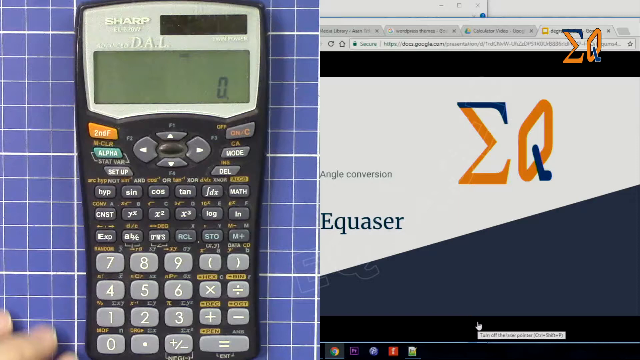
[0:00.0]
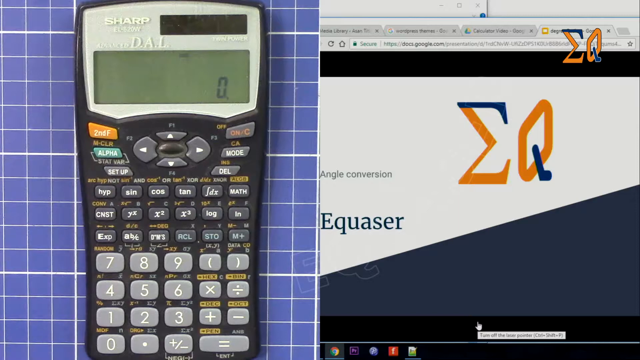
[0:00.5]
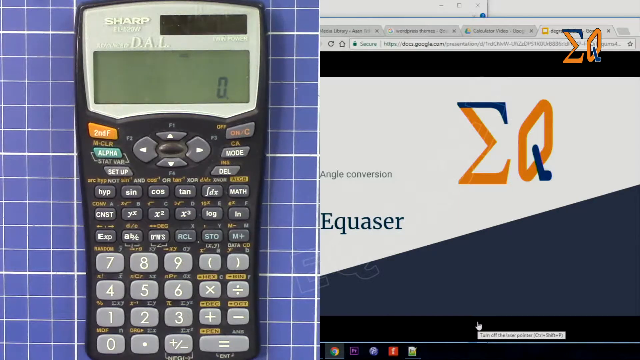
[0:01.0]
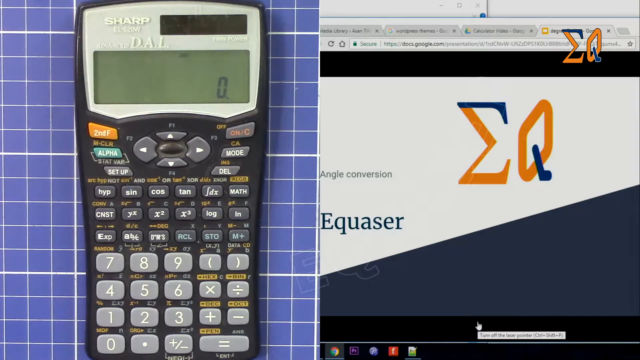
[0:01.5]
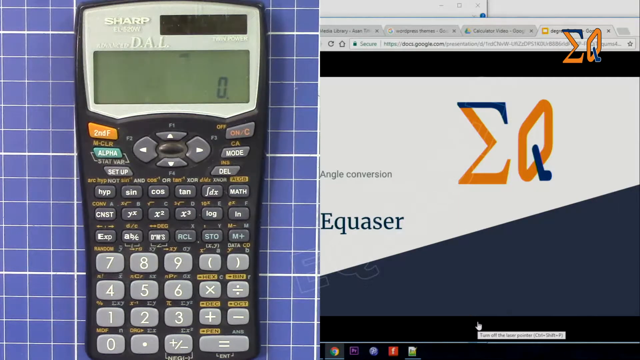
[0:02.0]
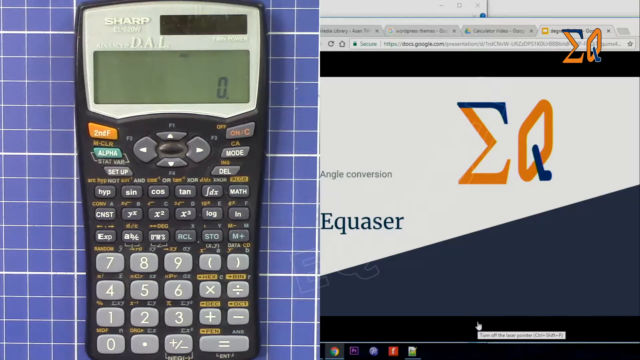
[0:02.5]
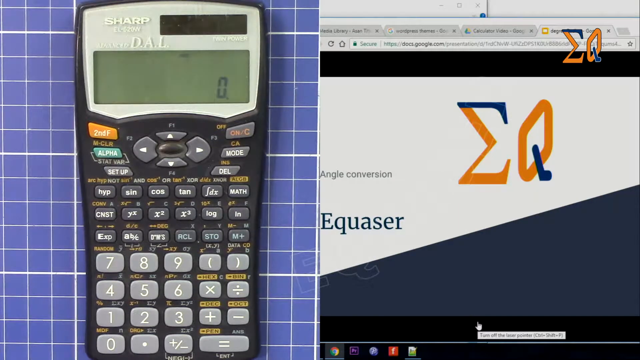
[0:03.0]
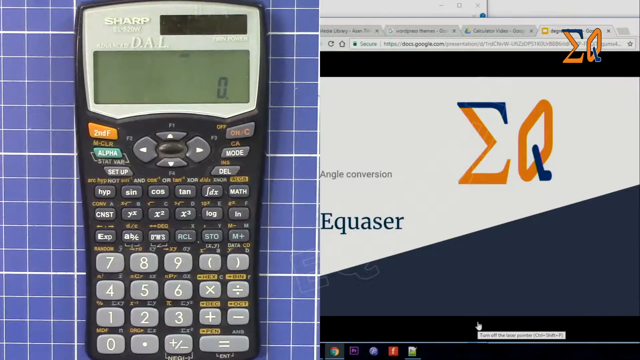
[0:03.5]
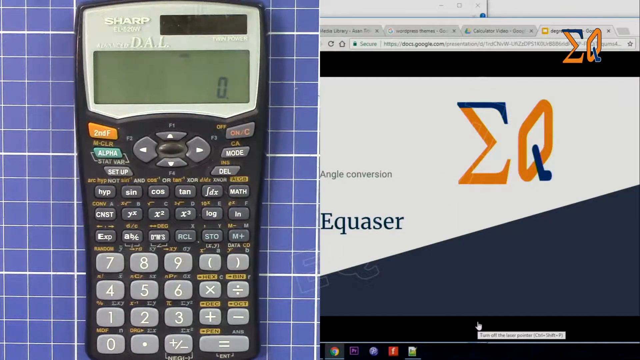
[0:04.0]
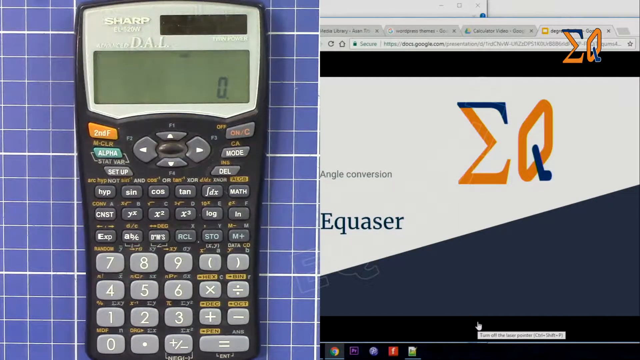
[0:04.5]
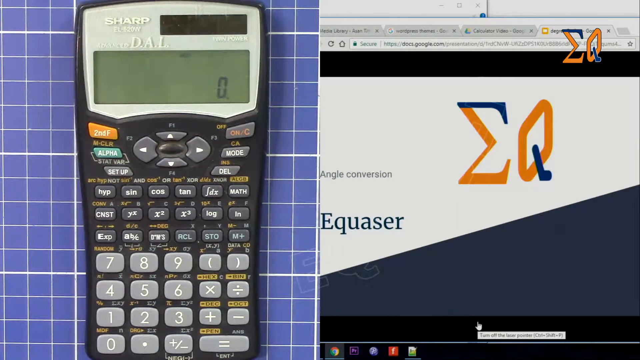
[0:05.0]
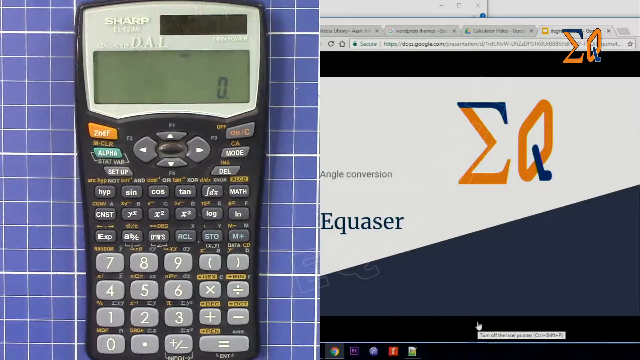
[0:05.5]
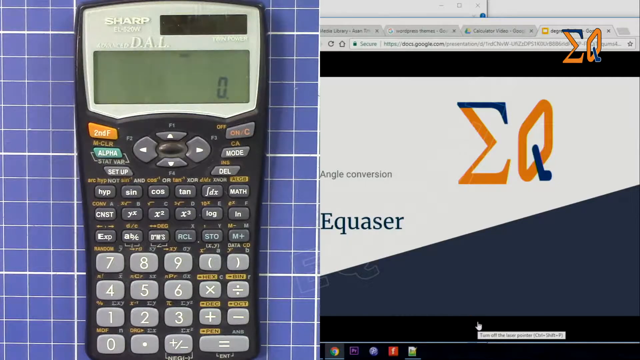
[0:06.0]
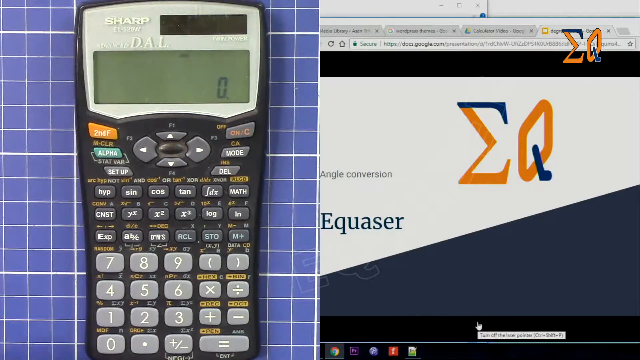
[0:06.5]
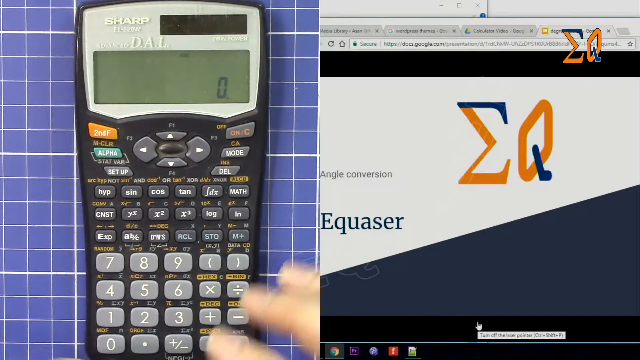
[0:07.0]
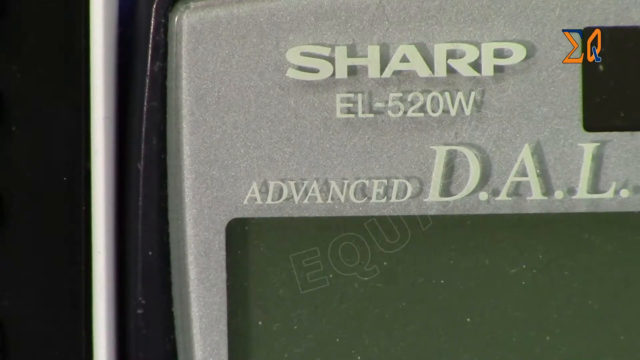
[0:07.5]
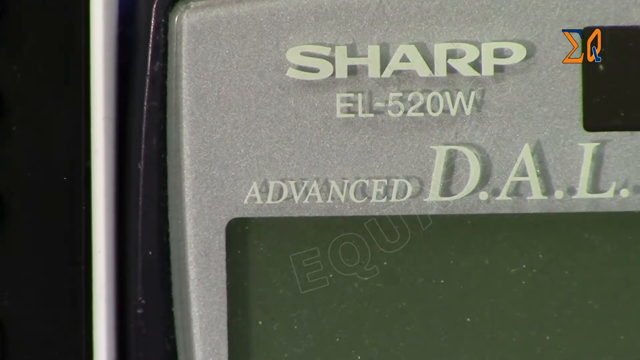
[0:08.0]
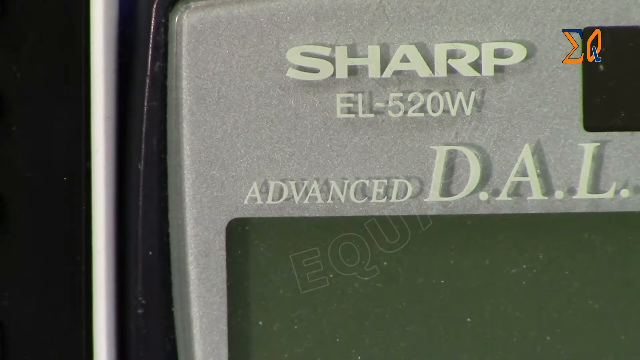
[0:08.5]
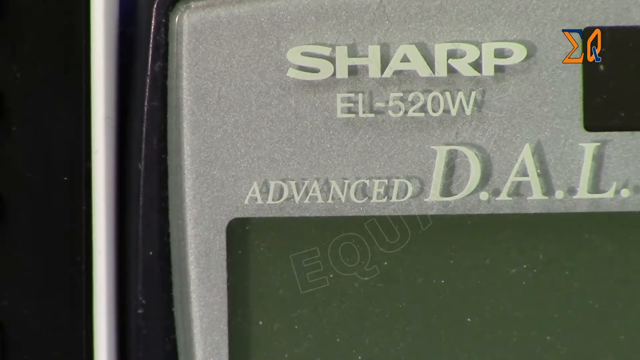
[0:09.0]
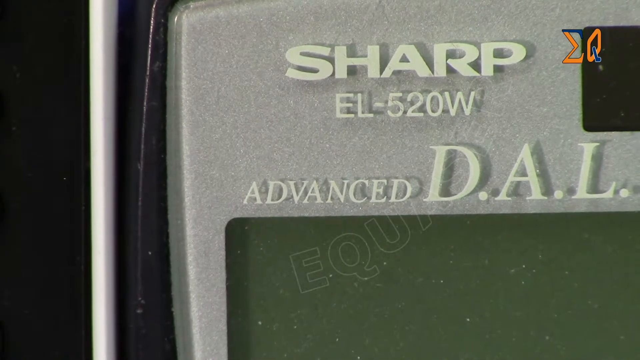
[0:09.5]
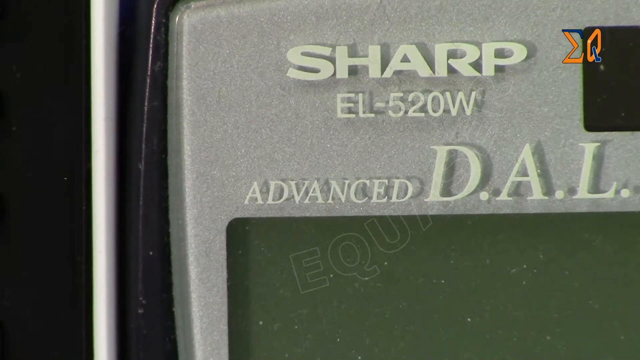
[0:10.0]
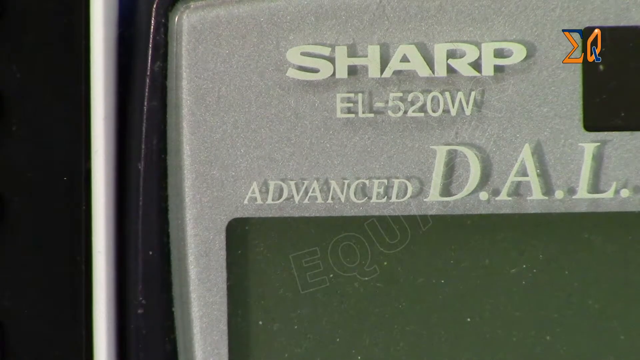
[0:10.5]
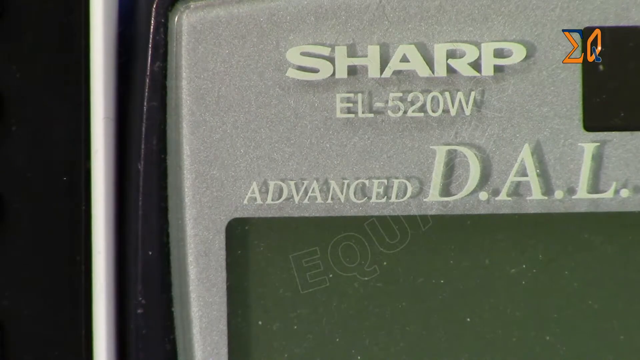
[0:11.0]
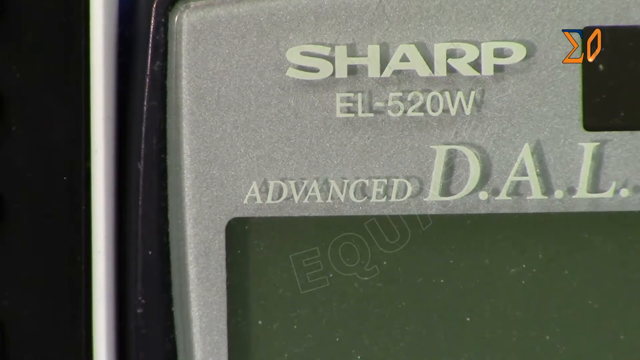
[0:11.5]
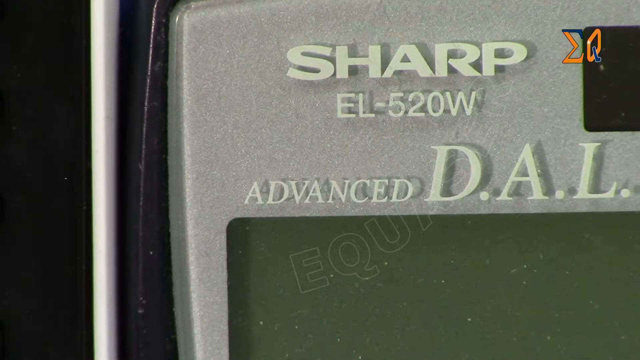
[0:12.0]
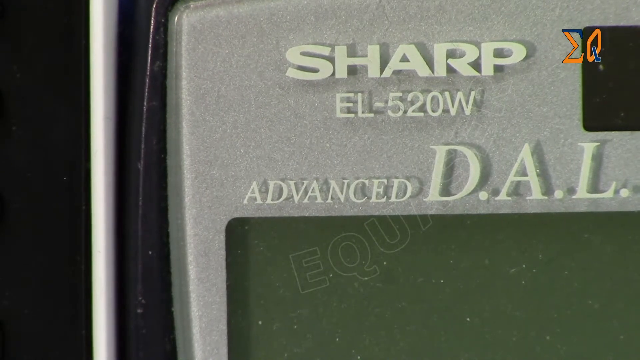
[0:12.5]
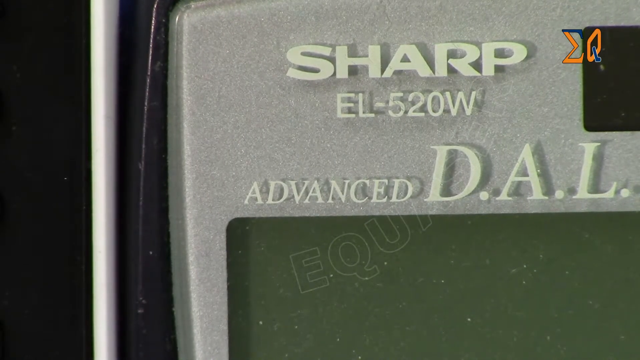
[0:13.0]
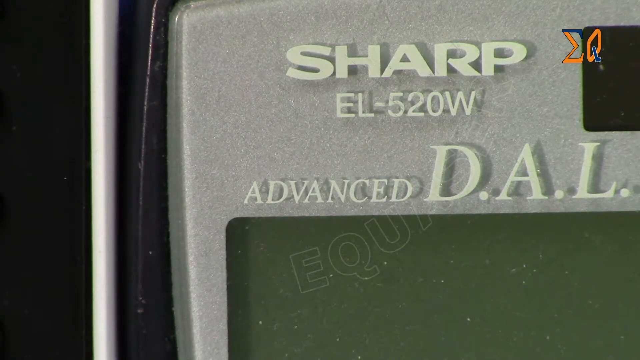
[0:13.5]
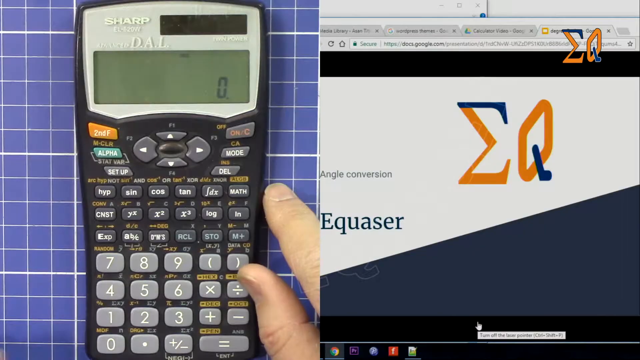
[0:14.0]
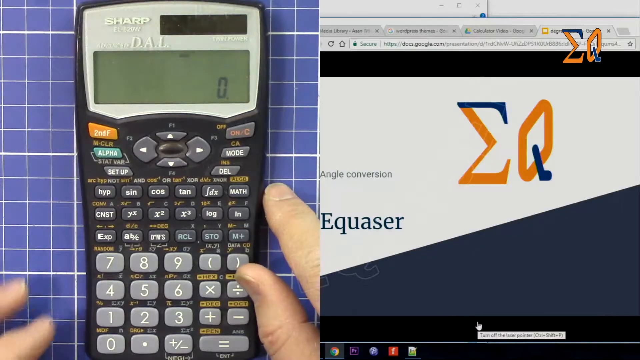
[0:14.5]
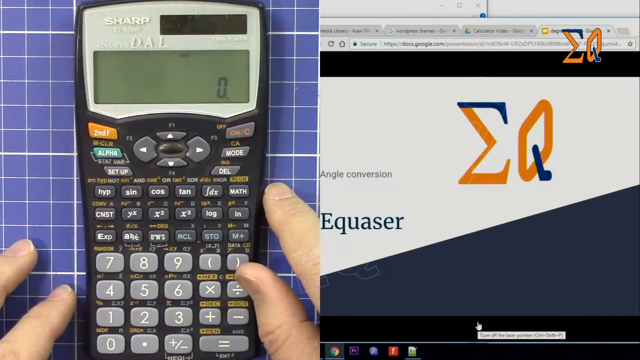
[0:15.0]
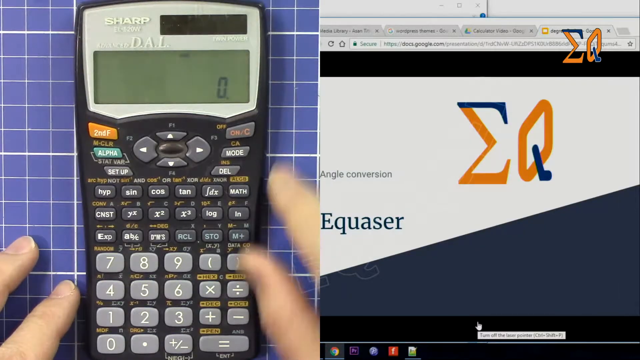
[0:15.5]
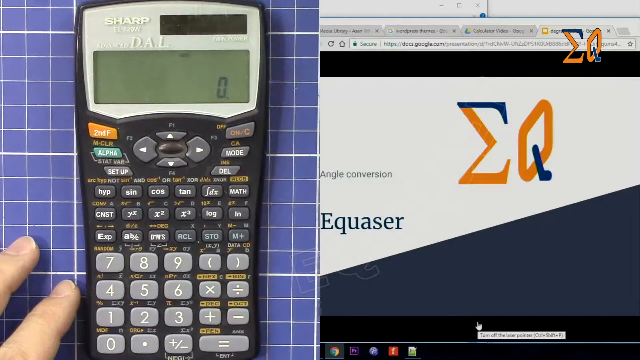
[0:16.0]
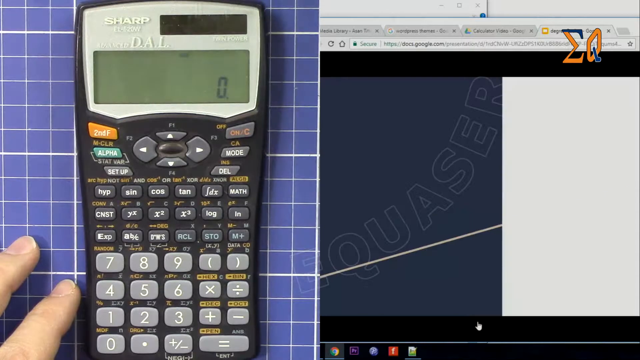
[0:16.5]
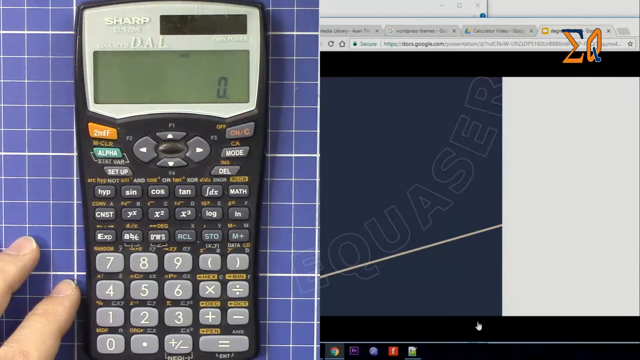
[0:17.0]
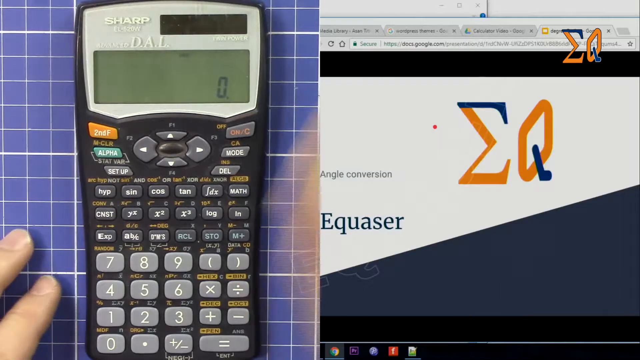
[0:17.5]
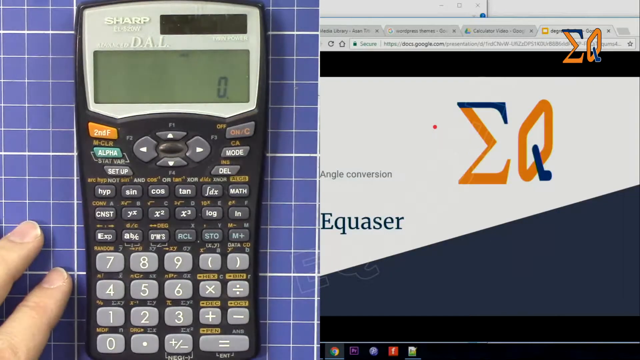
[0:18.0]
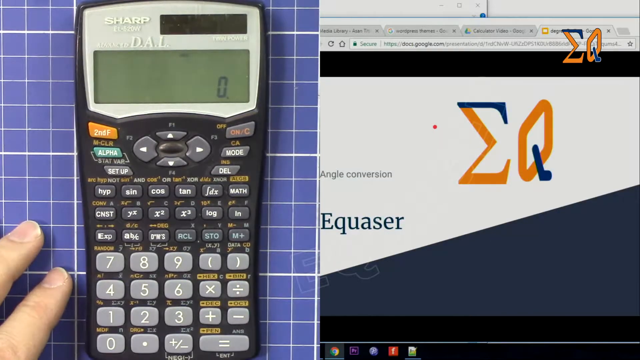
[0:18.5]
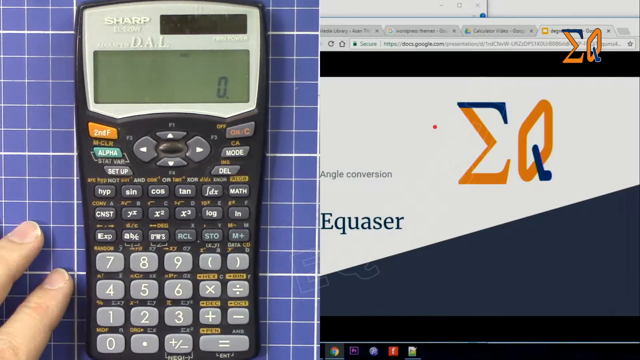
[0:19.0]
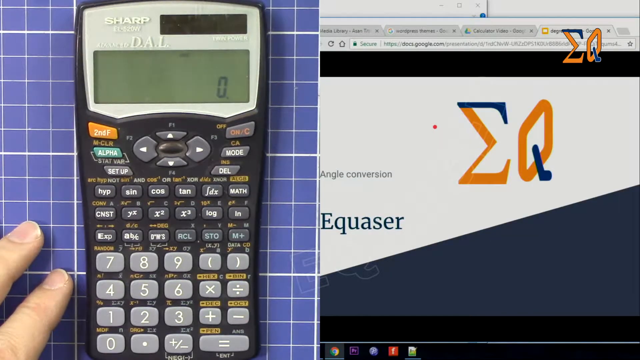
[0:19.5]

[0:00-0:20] The video opens on a split screen. On the left side is a blue background broken into small squares by white lines. On it is a dark gray calculator, and the top third of the calculator has a light gray background. In the top left there is a little panel for light to power it, and to the left of it, it says "sharp". Below that is the screen, which shows a zero. Then come the buttons: three on the left side, three on the right side, and a circular one in the center. Below those are three small gray buttons down and seven small gray buttons across, followed by the numbers. The right side is a close-up of a website. "EQ" is just visible toward the top right corner; the top of the E and the curly part of the Q are blue. The background is white, and below that it is blue. Coming in from the left side is "angle conversion", and a little further down is the word "equasar". The view zooms in on the upper portion of the calculator, with the EQ still in the top right corner. In white, bold, all capital letters it reads "sharp", then "EL-520W", then "advanced", "Dallas". The view zooms back out. Two fingers, a thumb and a pointer, come in, one from the bottom left and one from the bottom right next to the calculator. The right one goes off the side, and the left one stays.